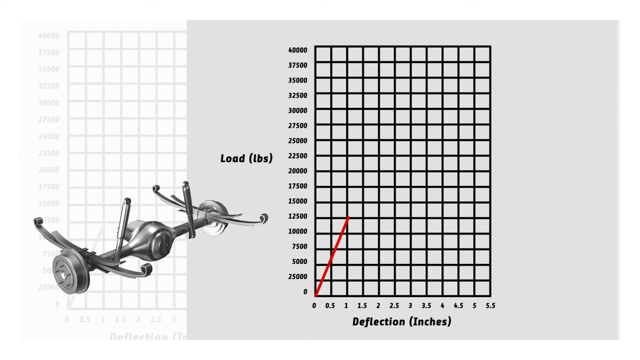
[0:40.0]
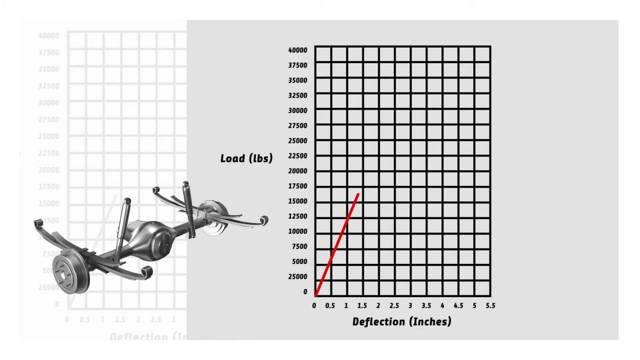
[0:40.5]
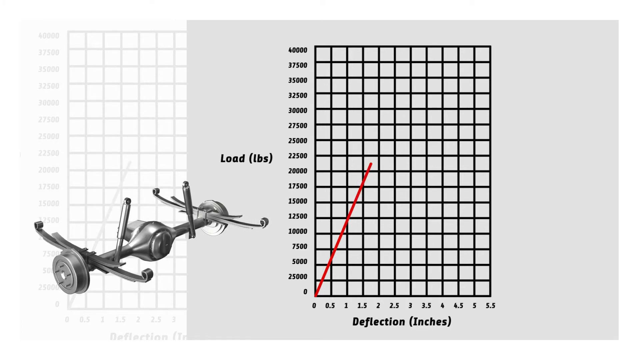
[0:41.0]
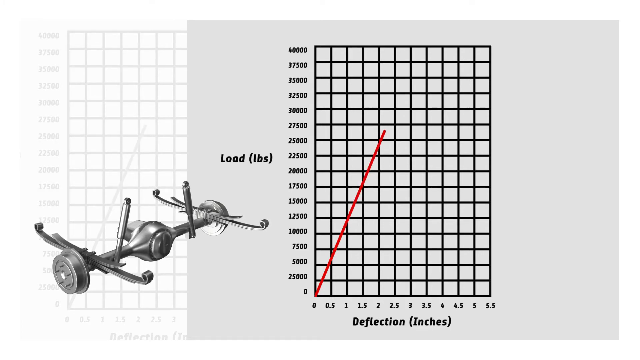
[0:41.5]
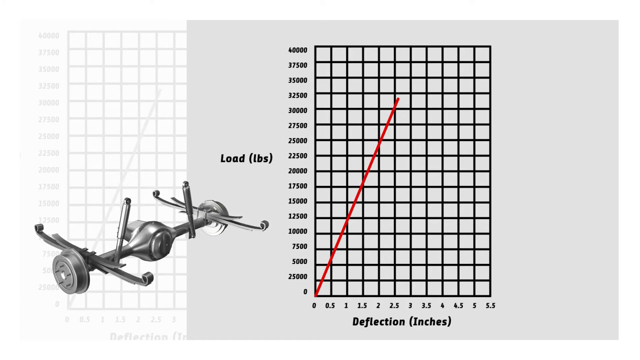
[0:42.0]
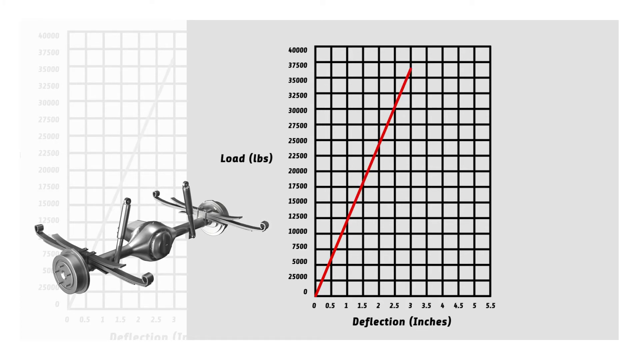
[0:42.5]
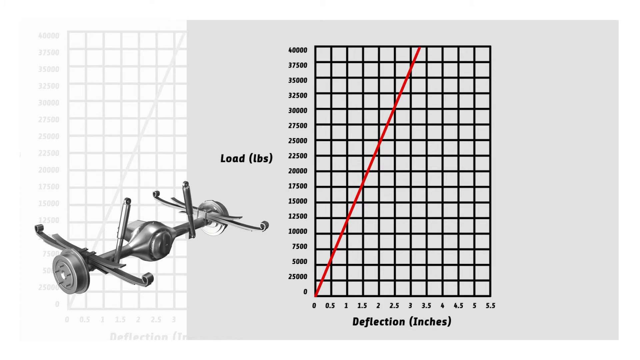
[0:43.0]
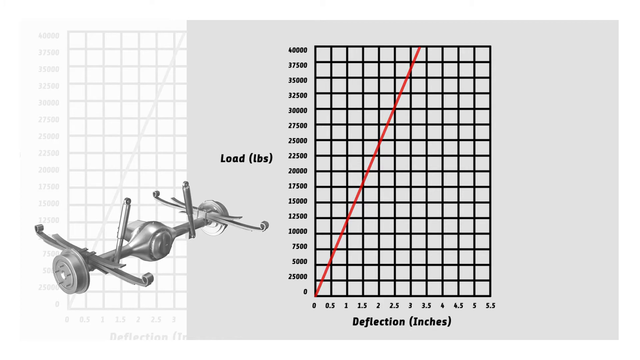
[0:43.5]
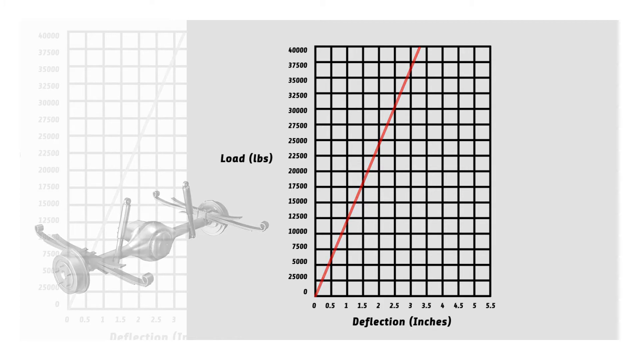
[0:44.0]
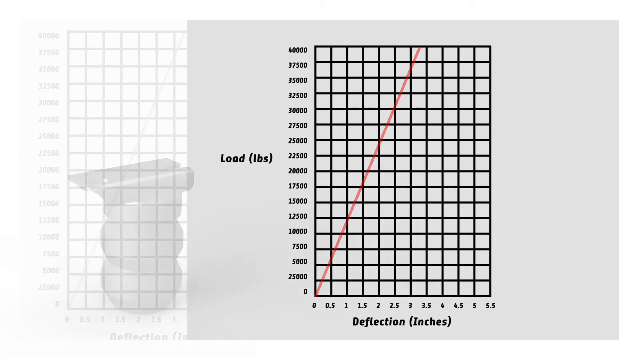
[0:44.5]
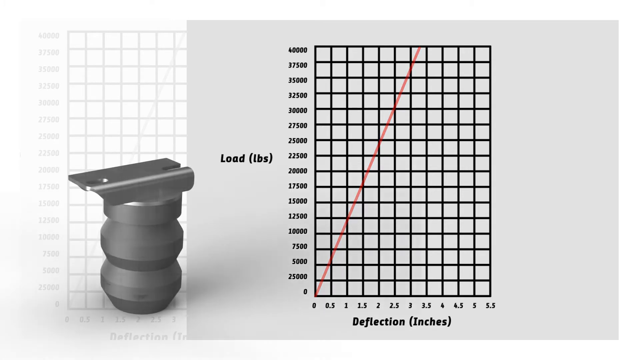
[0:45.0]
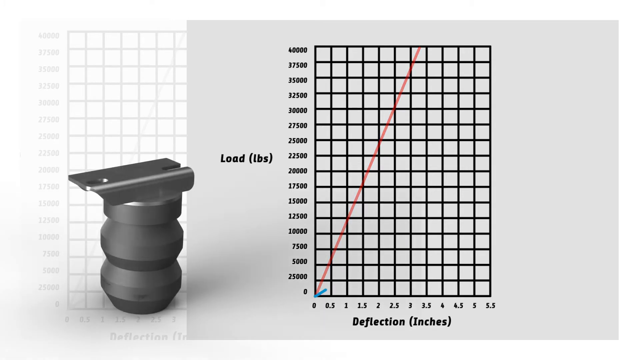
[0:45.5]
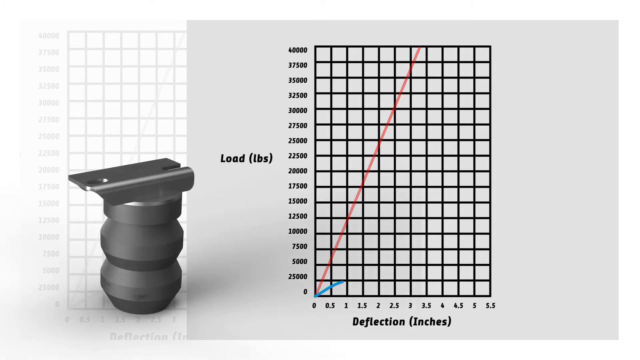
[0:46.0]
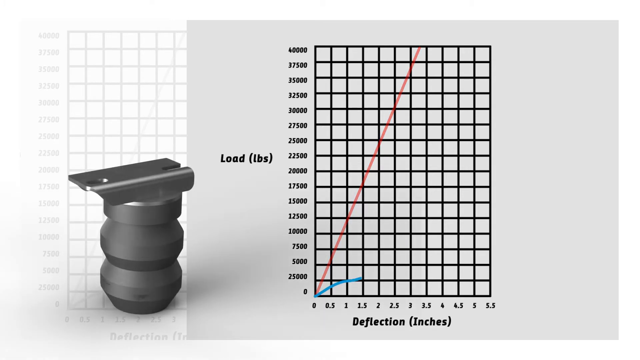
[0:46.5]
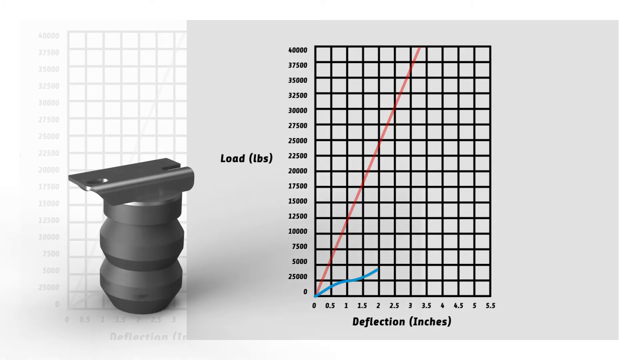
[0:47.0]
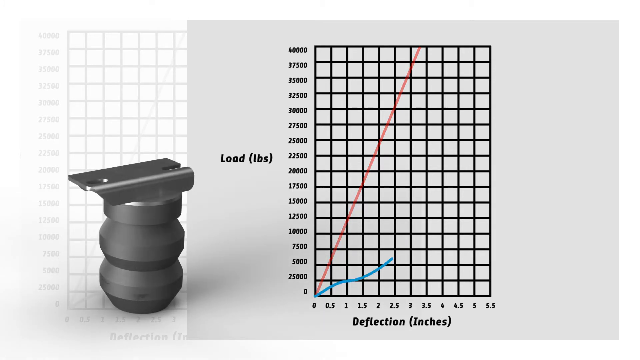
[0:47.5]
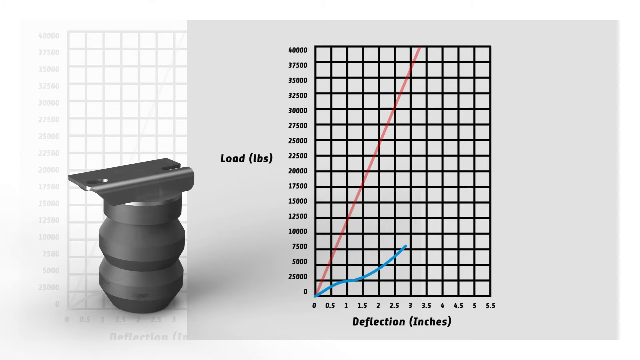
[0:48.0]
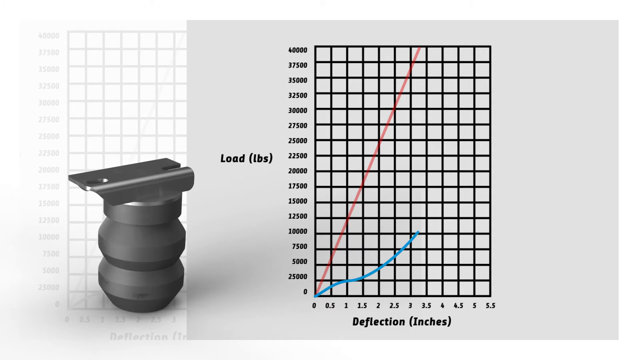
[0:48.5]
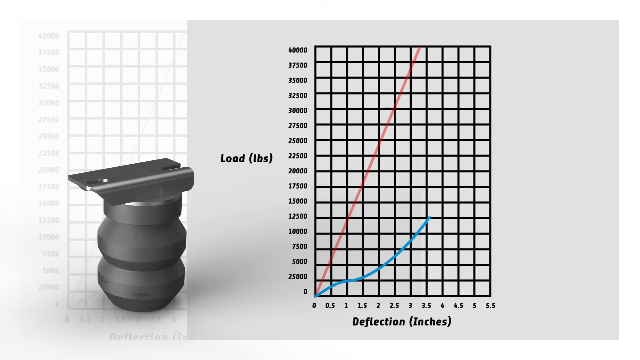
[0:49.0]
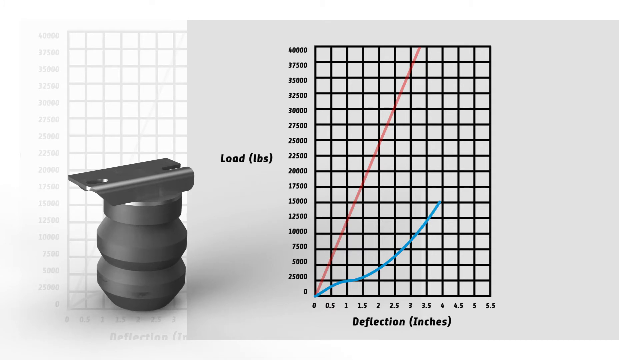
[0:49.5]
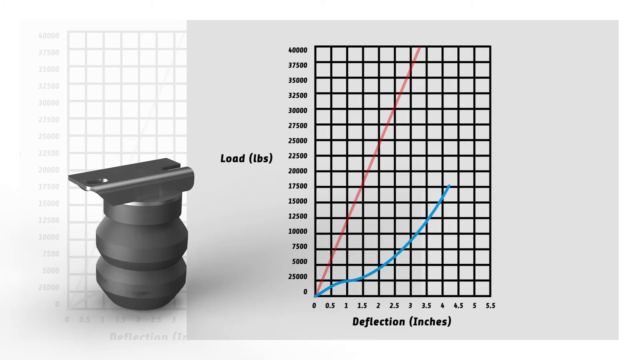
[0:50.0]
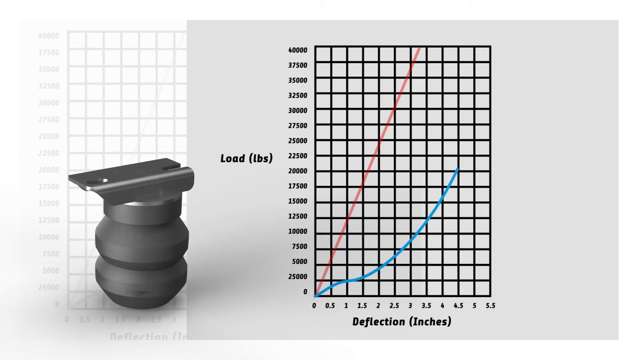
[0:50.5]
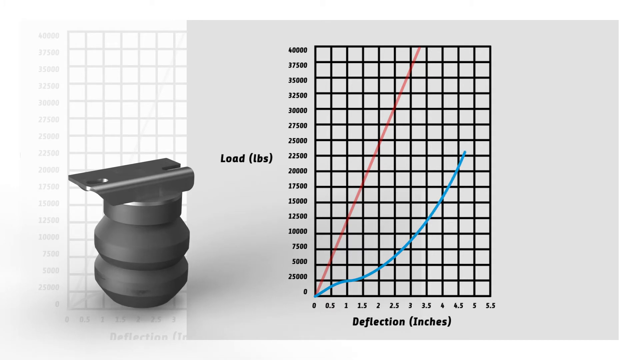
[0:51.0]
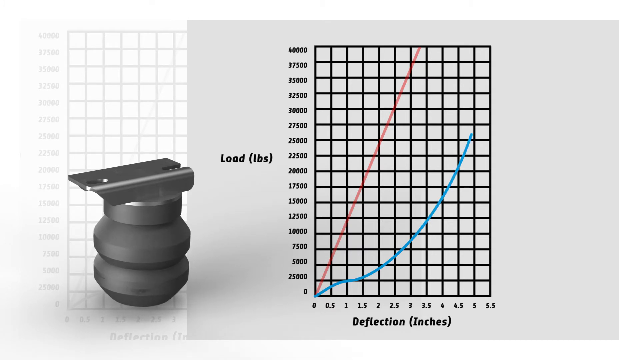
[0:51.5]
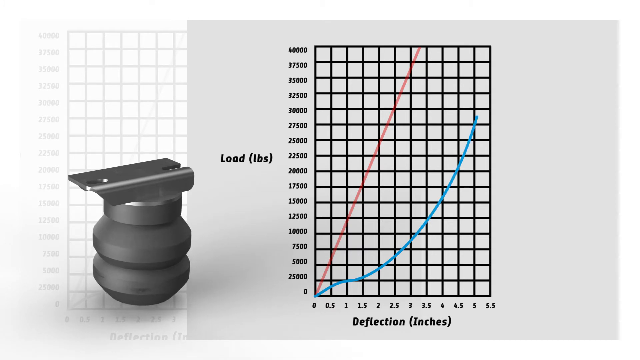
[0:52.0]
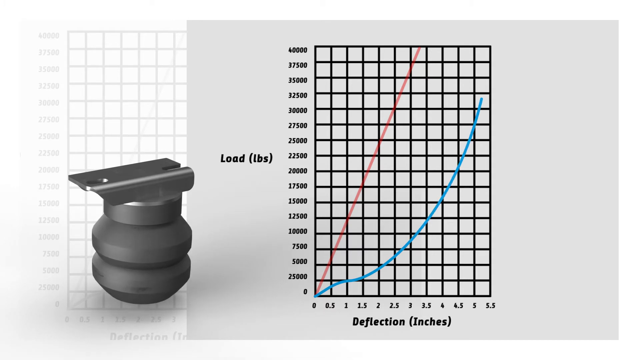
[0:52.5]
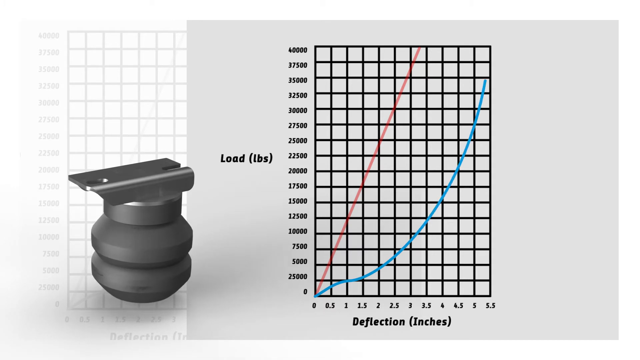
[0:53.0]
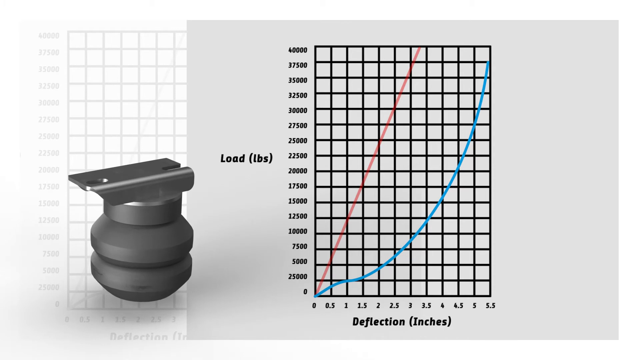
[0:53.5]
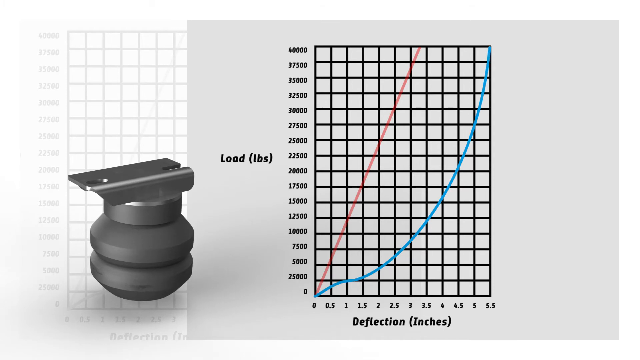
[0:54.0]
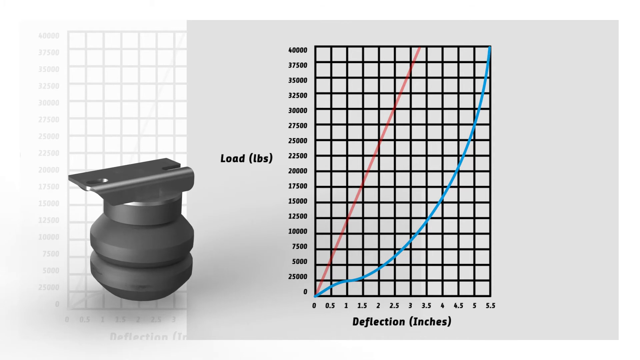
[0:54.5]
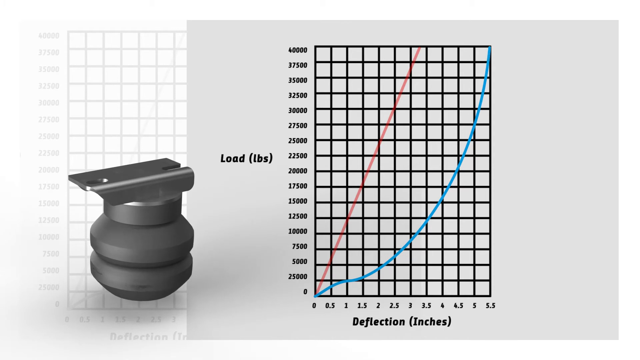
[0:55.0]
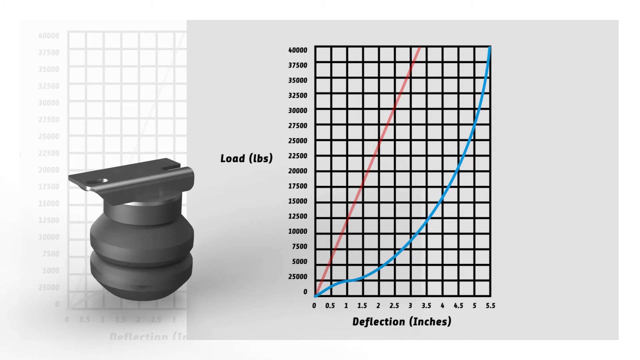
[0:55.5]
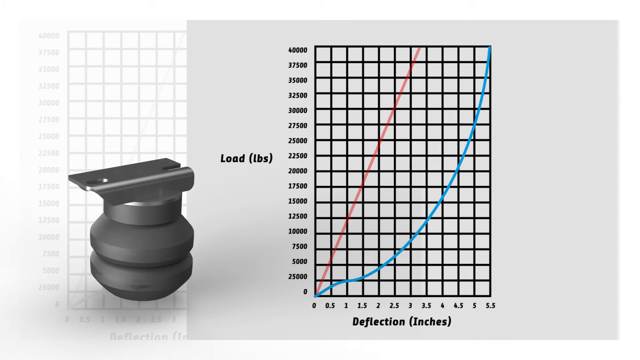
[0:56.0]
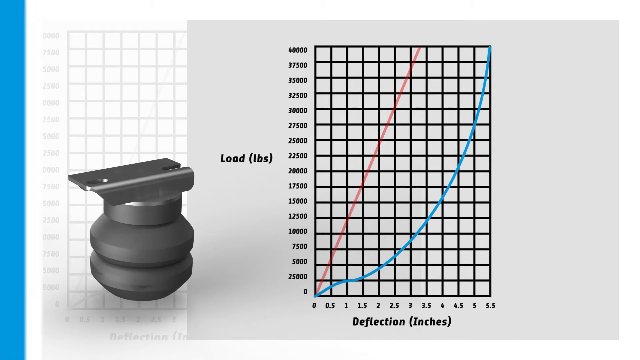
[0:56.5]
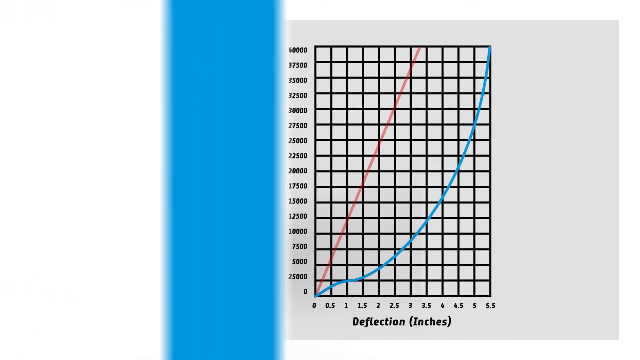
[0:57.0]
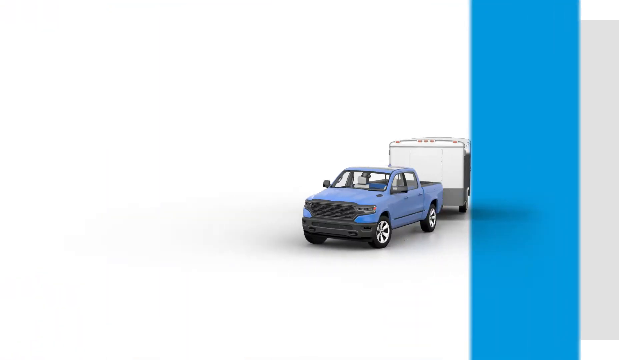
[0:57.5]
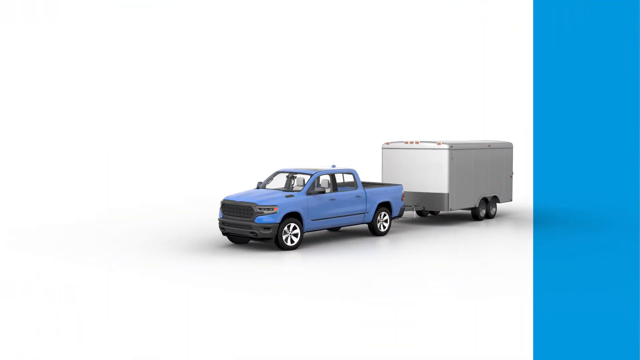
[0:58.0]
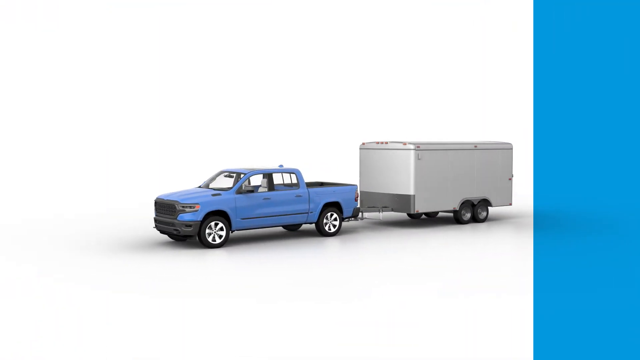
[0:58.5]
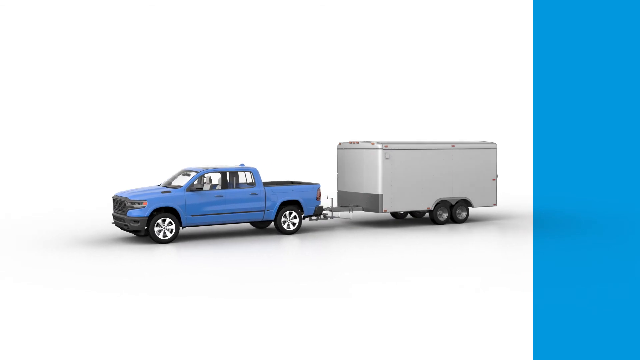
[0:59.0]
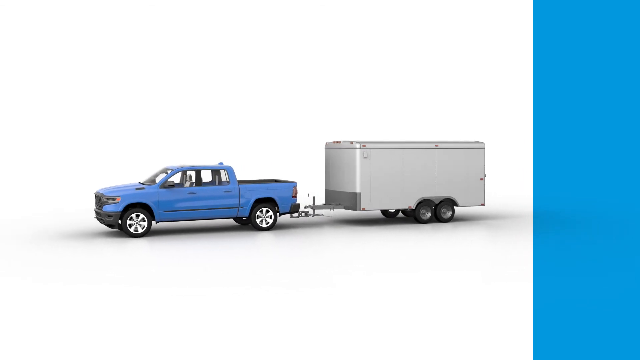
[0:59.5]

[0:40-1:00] The silver axle remains on the left side and the graph on the right, with the red line continuing to progress upward in a pretty much straight line diagonally toward the right until it reaches the top. When it gets to the top, the axle disappears and is replaced by one part of the leveling kit, which looks like a couple of bulging, thick rubber balloons with a little bracket on top. As it is shown, a blue line comes up on the graph, starting from zero deflection and going toward the right; it is much shallower than the red line. The blue line curves all the way up to the top right corner. When it reaches the top, a blue bar sweeps everything away, and the blue pickup truck is seen again with the box trailer behind it.